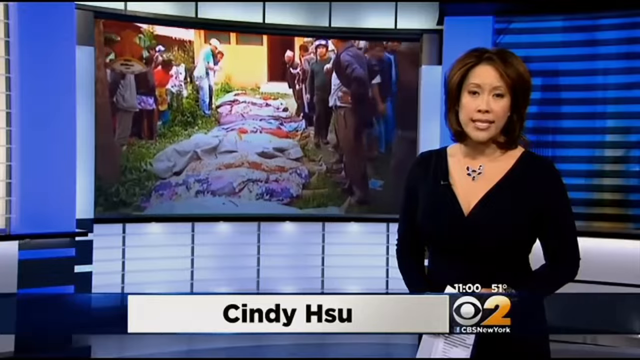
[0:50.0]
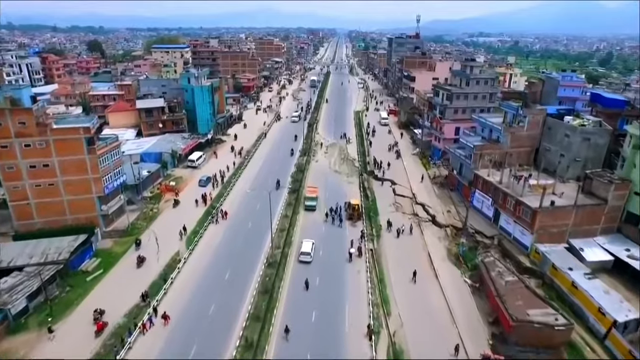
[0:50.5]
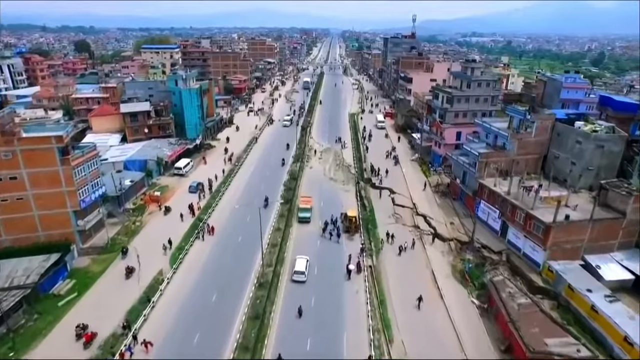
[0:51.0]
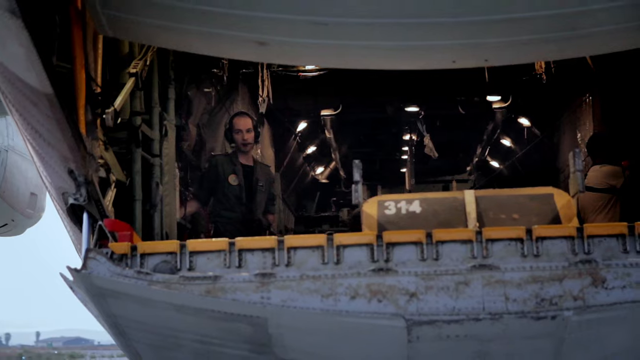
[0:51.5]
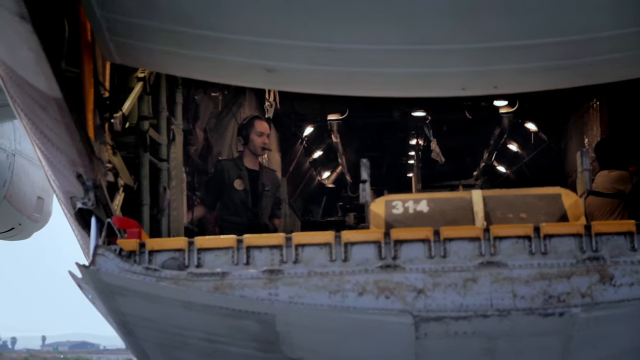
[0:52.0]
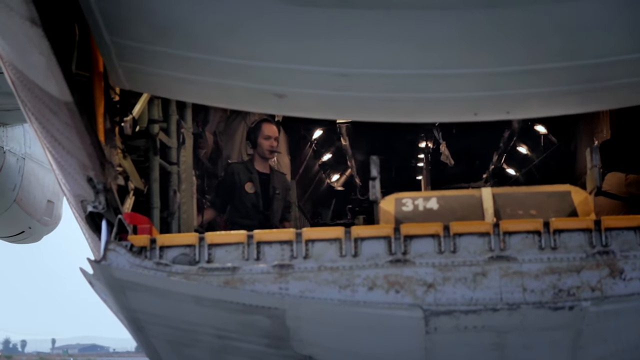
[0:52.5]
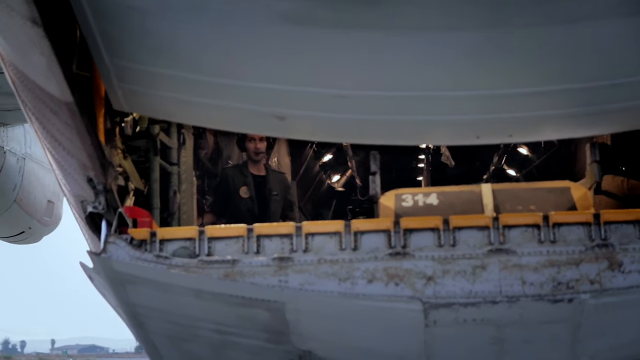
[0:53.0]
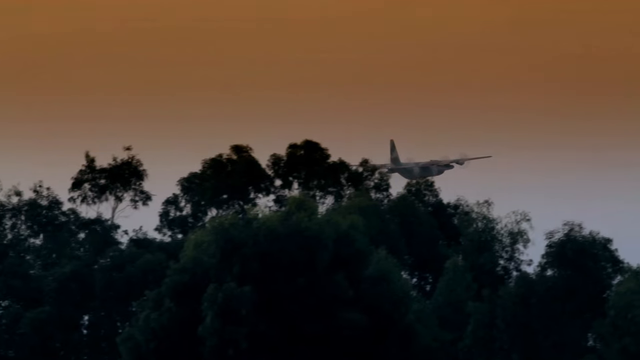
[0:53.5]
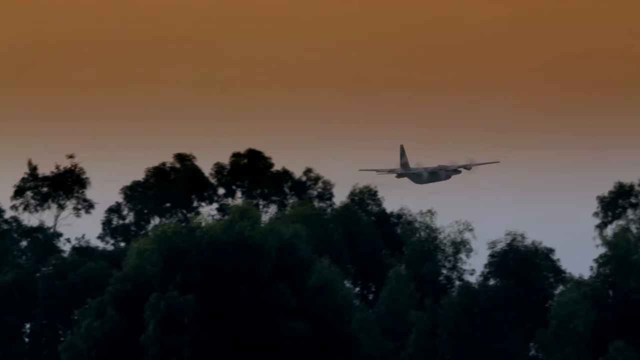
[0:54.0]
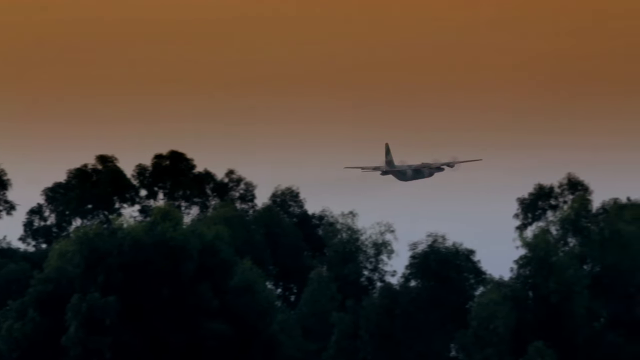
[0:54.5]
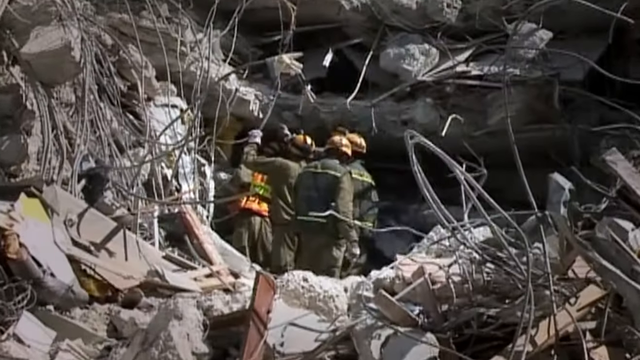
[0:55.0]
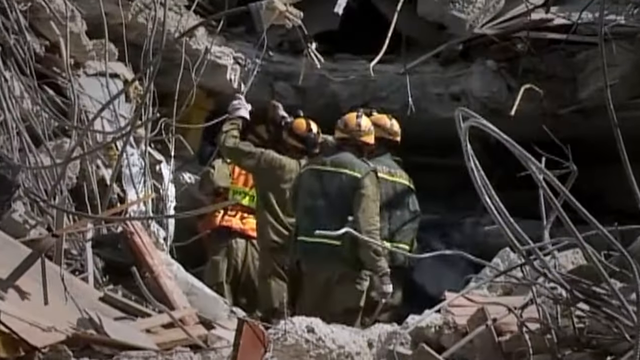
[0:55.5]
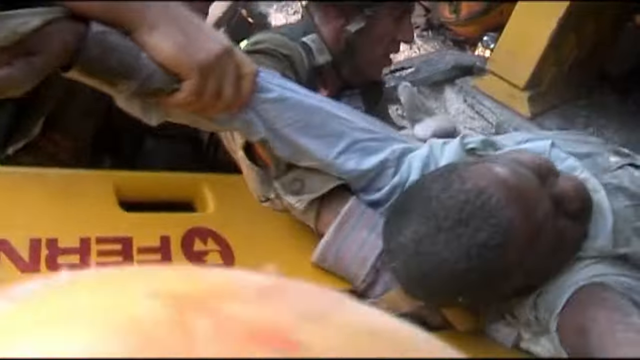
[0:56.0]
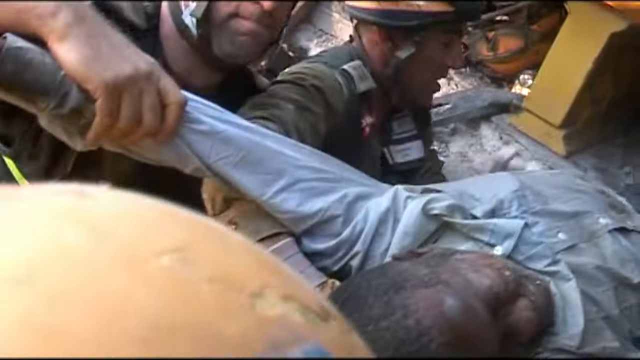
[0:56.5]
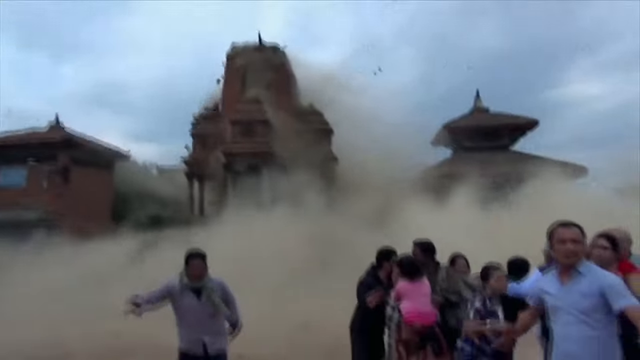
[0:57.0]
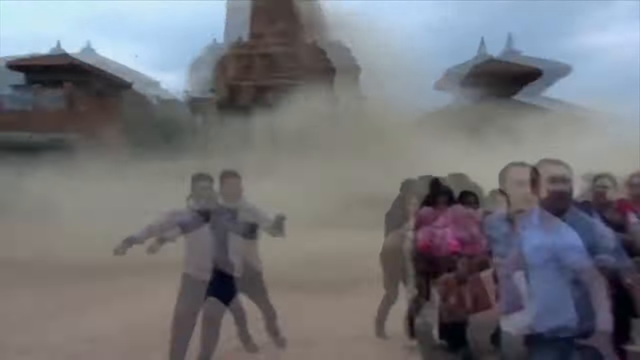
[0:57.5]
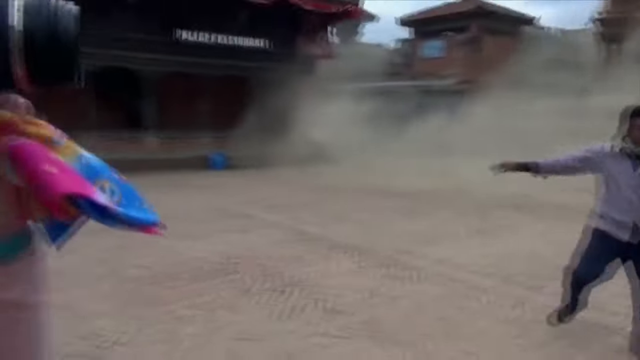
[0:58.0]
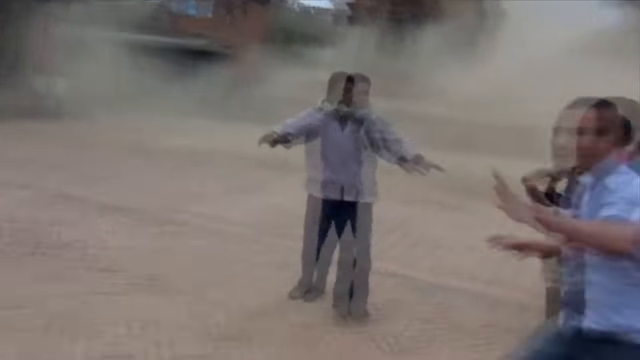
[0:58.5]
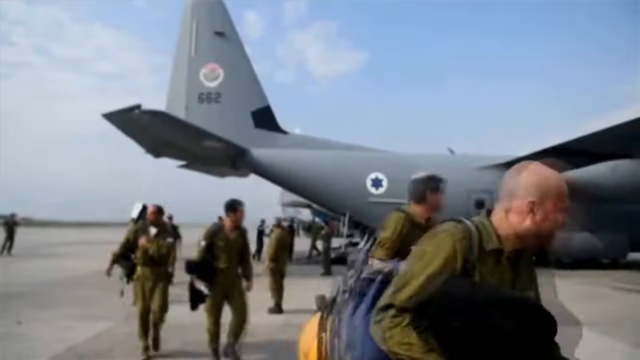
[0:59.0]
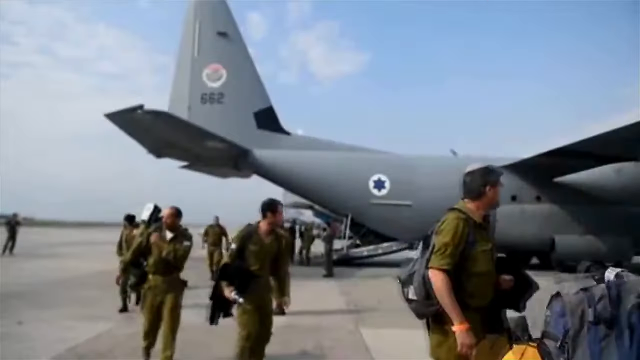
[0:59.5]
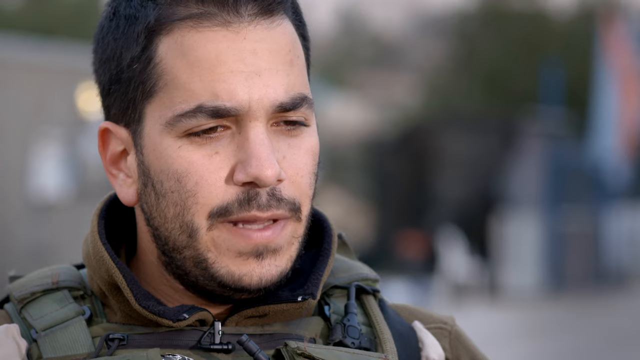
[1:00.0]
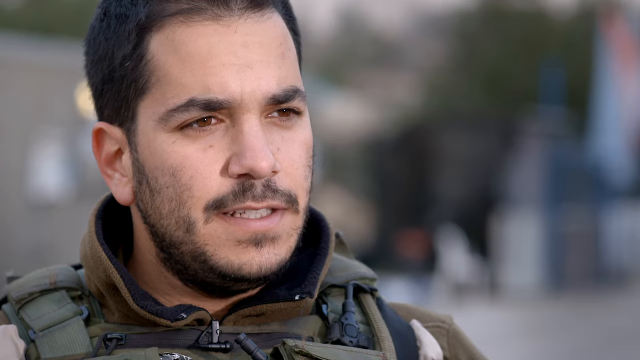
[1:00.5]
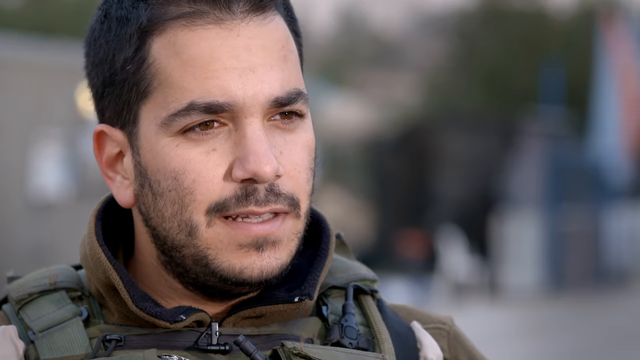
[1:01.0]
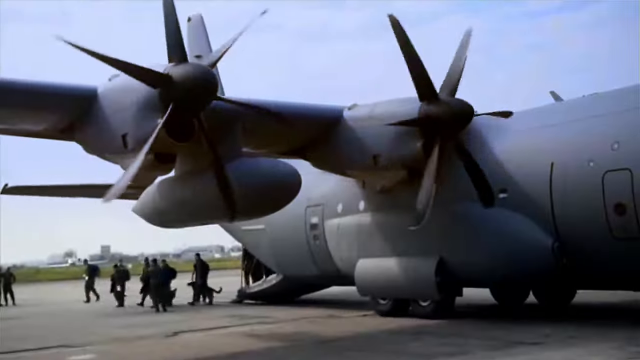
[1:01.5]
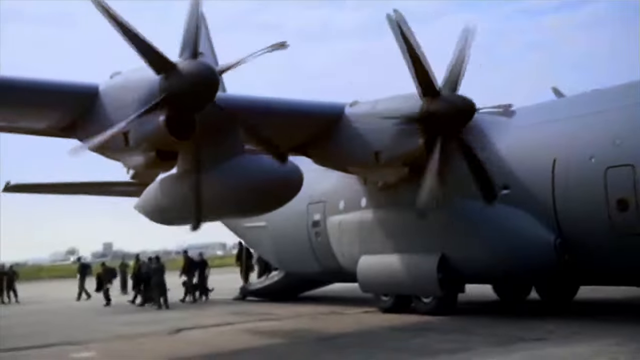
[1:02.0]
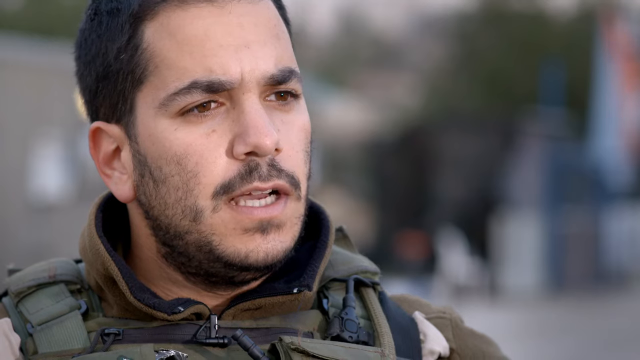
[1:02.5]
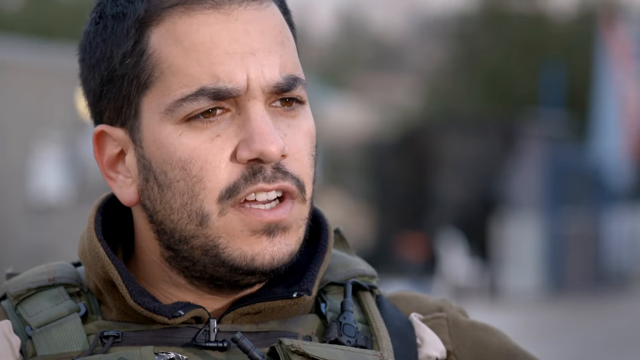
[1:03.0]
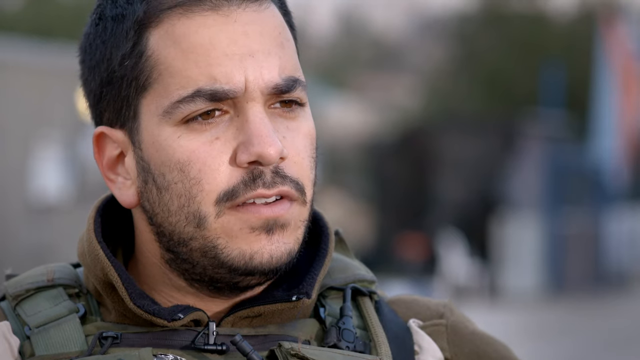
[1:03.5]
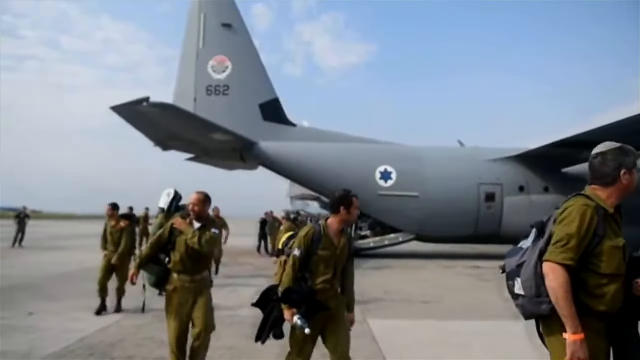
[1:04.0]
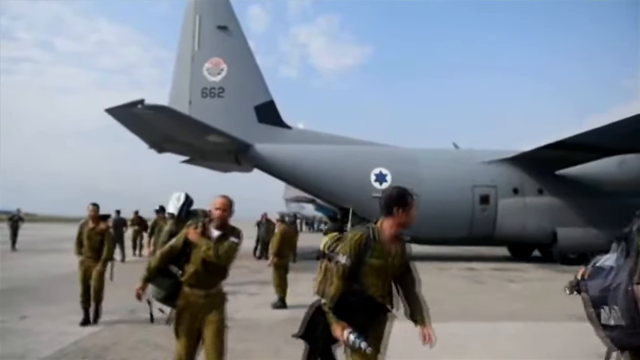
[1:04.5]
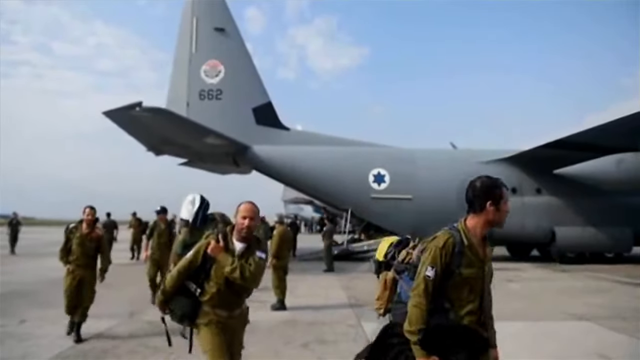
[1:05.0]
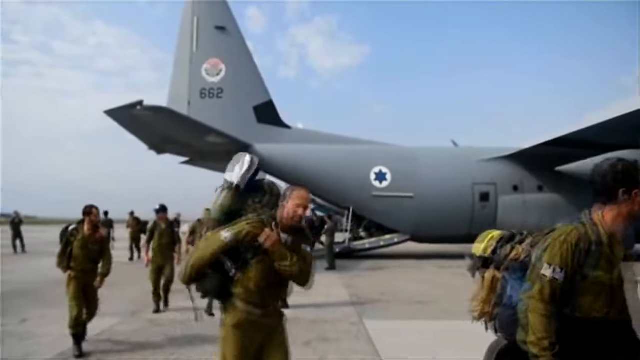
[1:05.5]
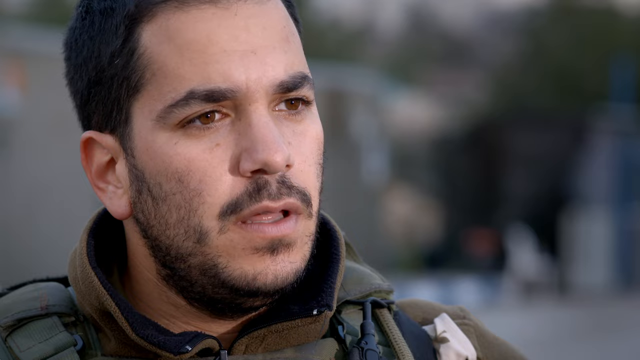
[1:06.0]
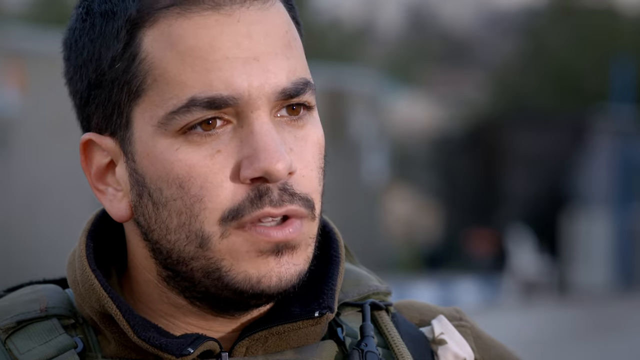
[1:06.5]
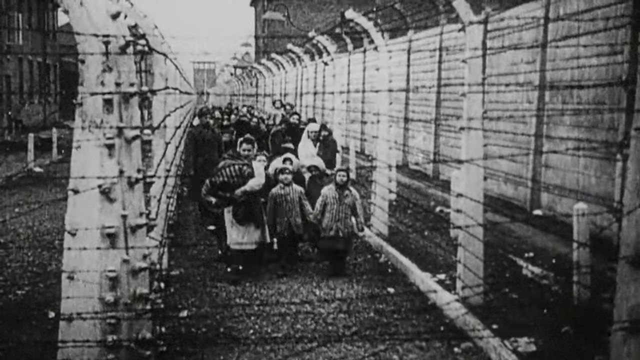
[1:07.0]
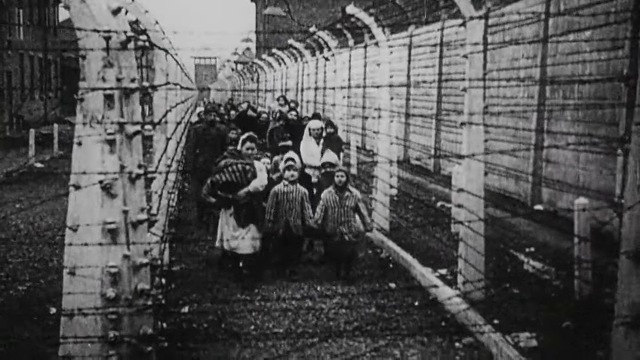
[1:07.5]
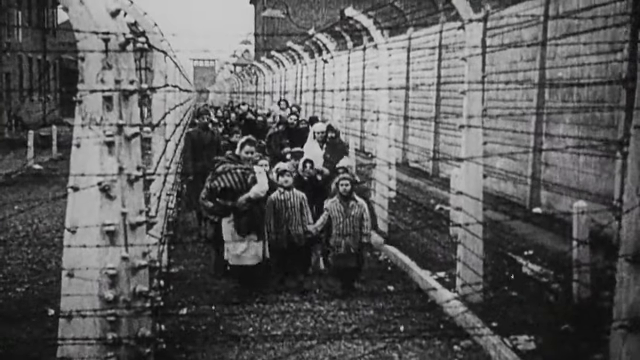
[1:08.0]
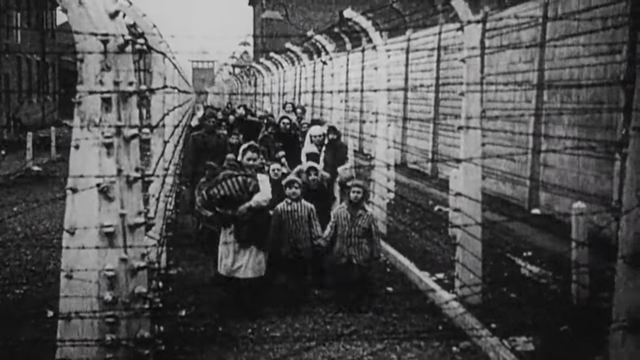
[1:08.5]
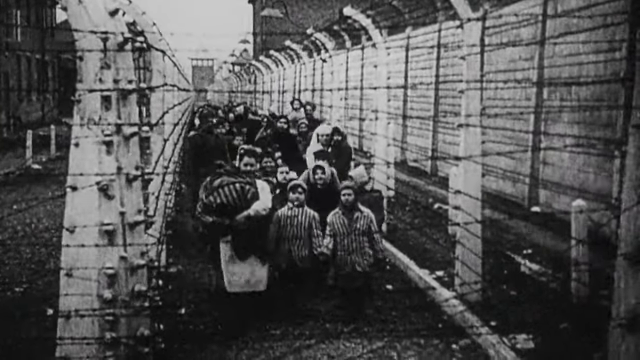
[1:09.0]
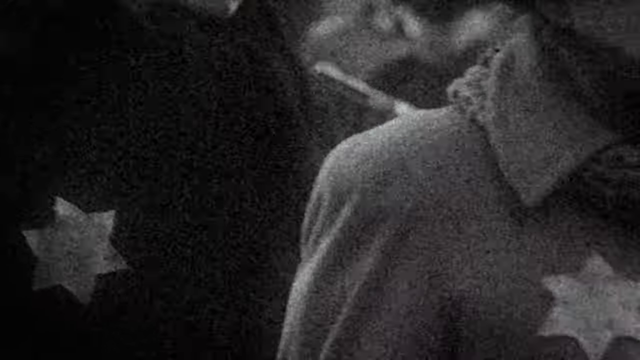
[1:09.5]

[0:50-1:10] What looks like a news report appears, with an African American woman in a black dress with a V-neck top on the right side of the screen; underneath her she is identified as Cindy Hsu. As she speaks, the picture shows a sad scene that looks like several covered bodies lying side by side on the ground. An aerial view of a city follows, showing two streets of what seems like three lanes each, with a bunch of buildings on each side stretching down a very long avenue. Something like a plane takes off. Several scenes of destruction follow, including flooding and earthquakes, and Major Gino speaks to the camera, interlaced with flashes from different wartimes, some more modern and some from older wars, such as World War II.